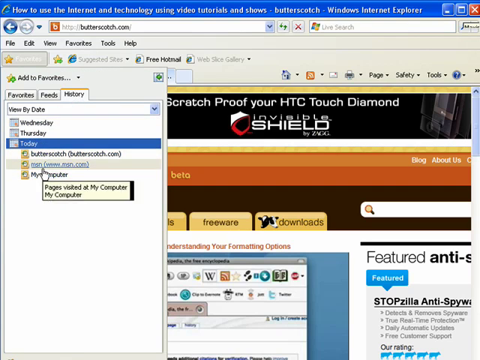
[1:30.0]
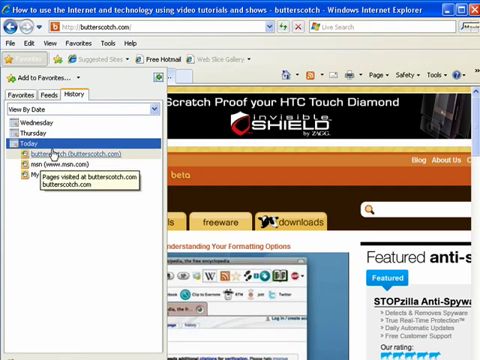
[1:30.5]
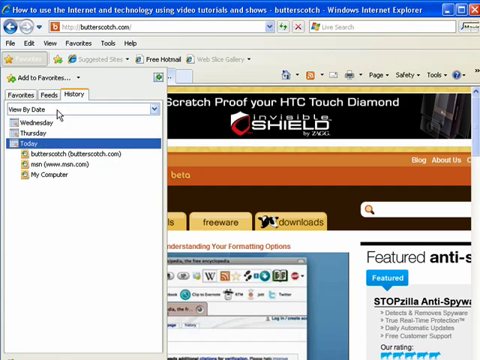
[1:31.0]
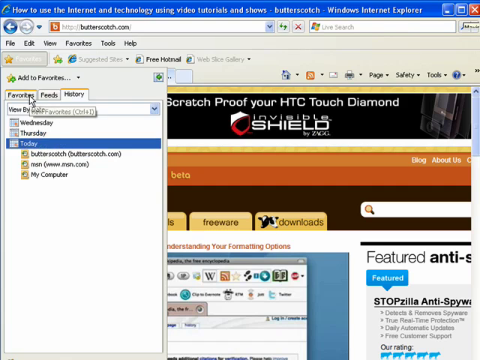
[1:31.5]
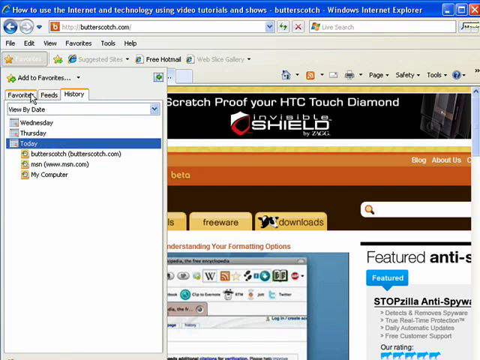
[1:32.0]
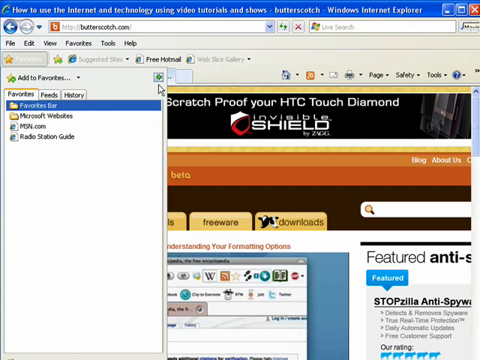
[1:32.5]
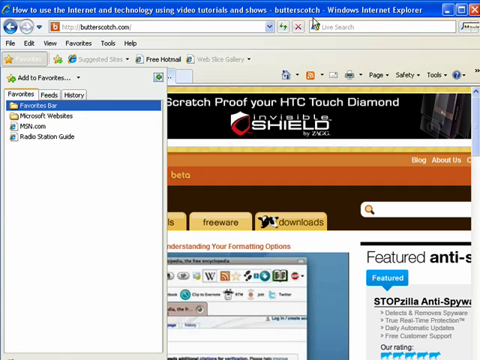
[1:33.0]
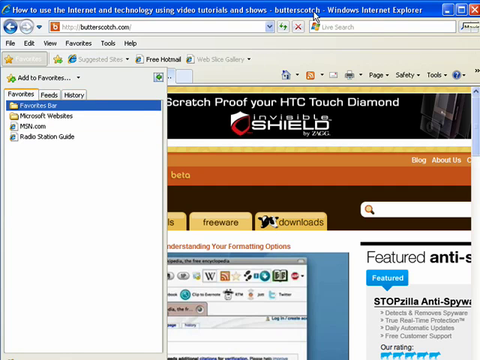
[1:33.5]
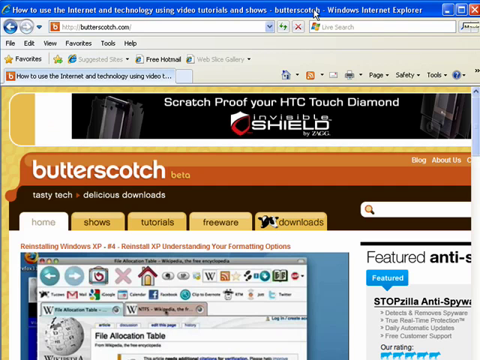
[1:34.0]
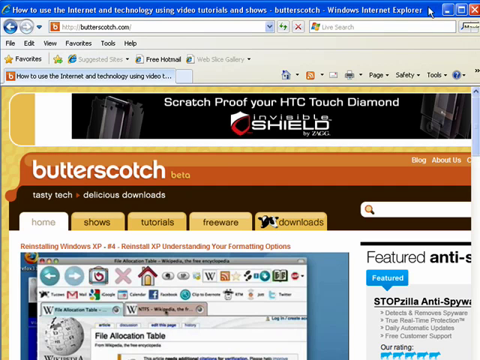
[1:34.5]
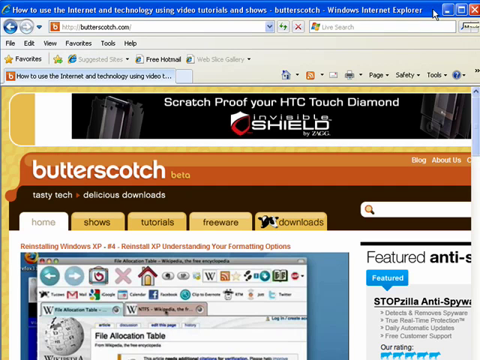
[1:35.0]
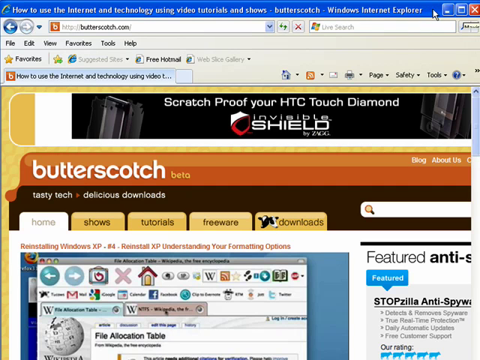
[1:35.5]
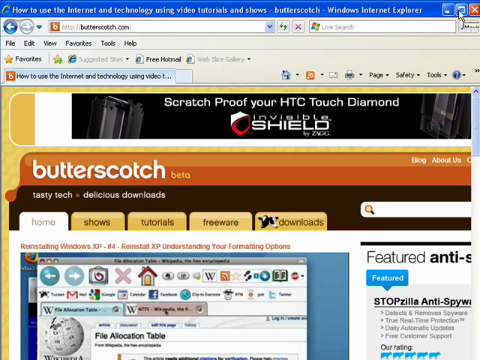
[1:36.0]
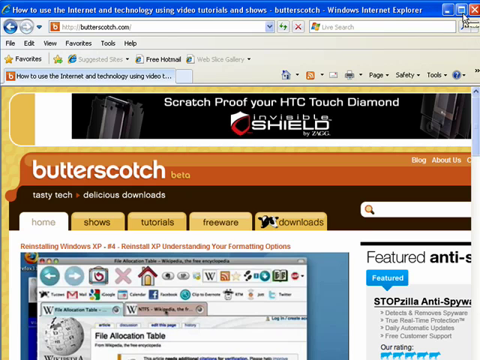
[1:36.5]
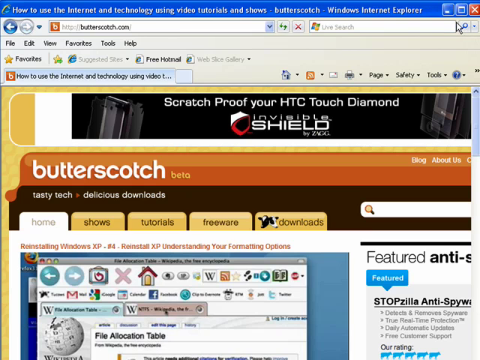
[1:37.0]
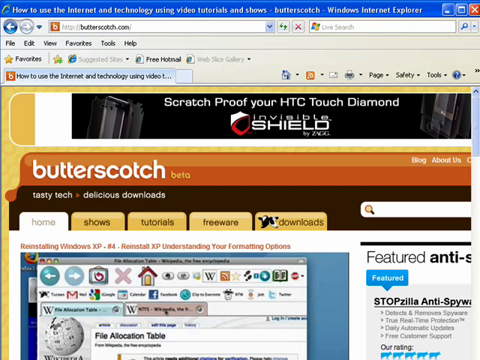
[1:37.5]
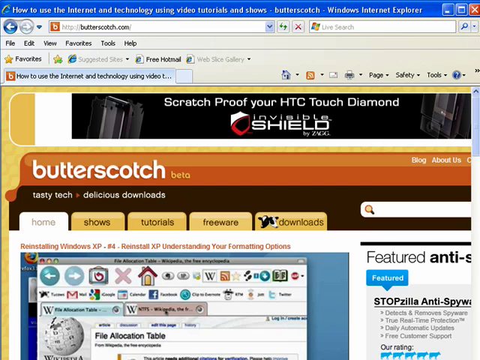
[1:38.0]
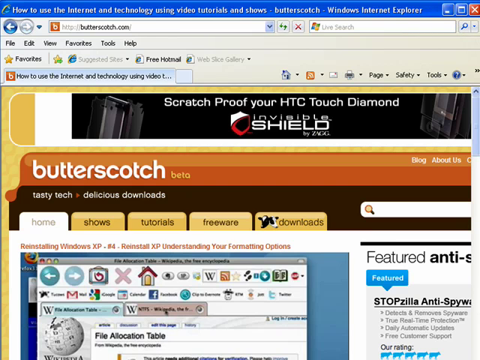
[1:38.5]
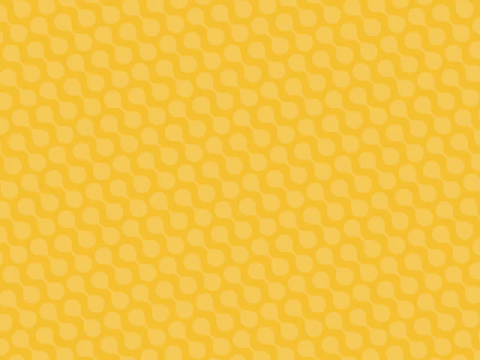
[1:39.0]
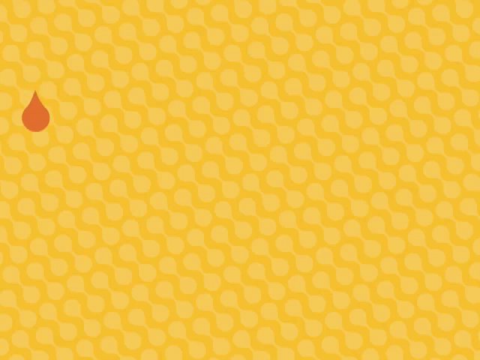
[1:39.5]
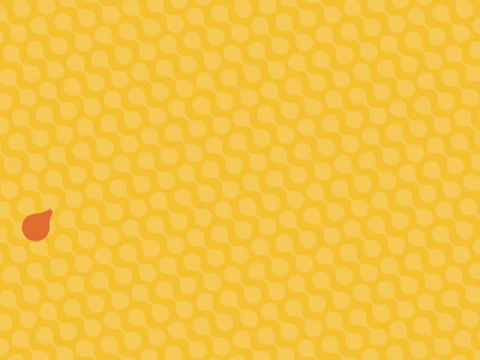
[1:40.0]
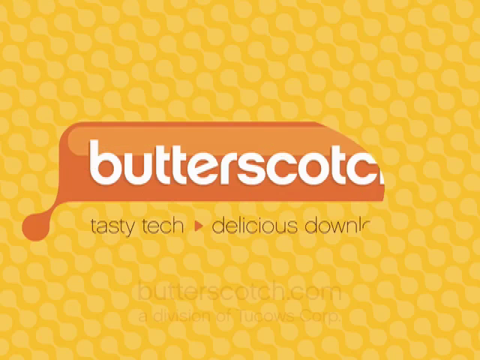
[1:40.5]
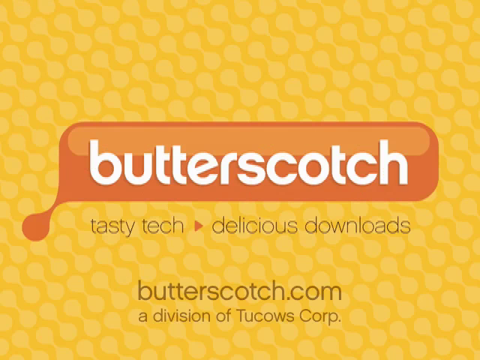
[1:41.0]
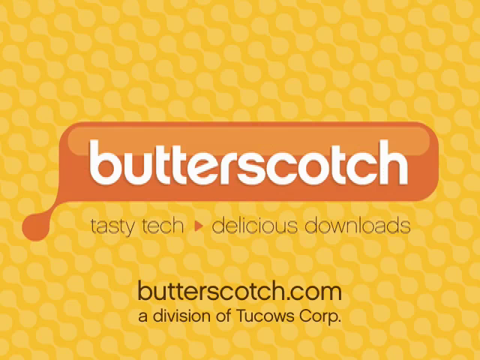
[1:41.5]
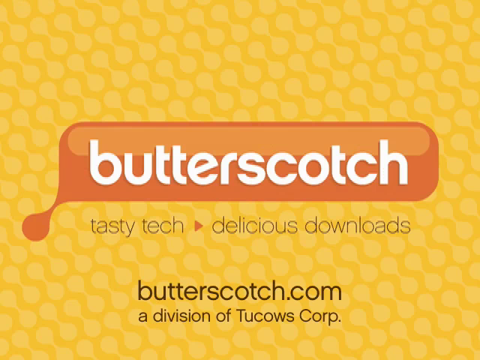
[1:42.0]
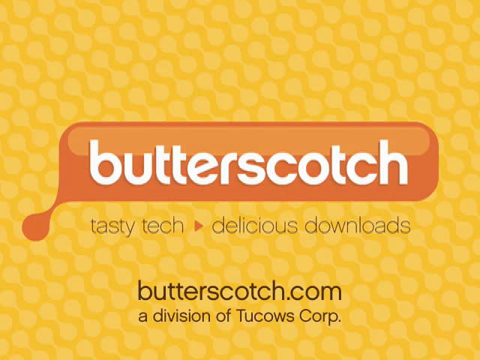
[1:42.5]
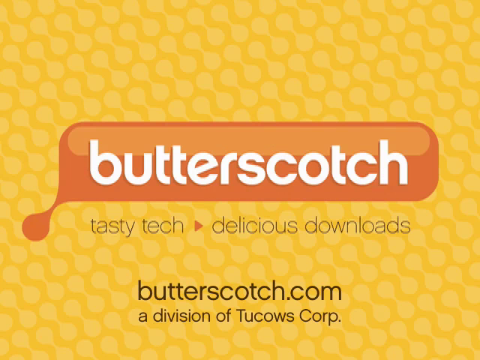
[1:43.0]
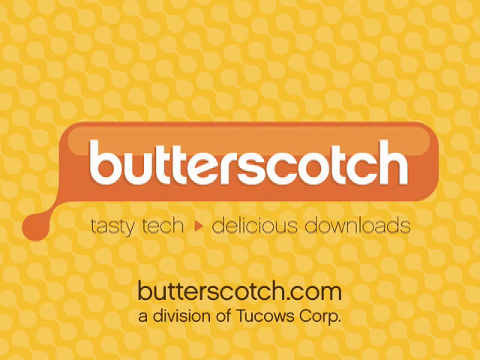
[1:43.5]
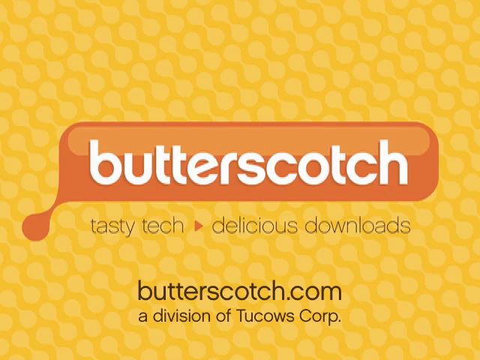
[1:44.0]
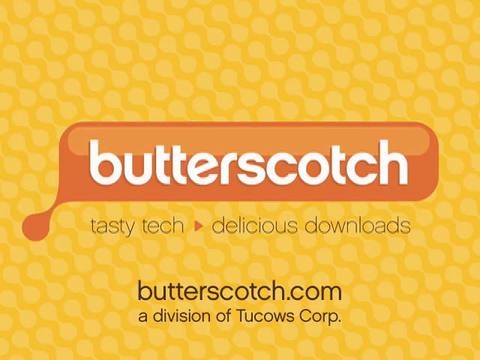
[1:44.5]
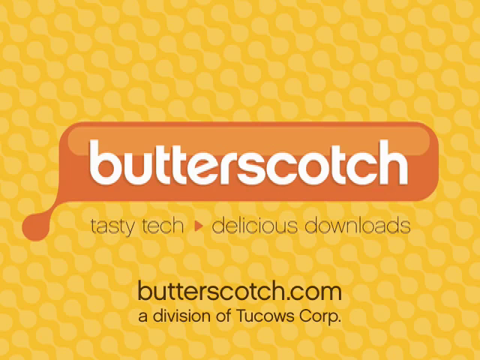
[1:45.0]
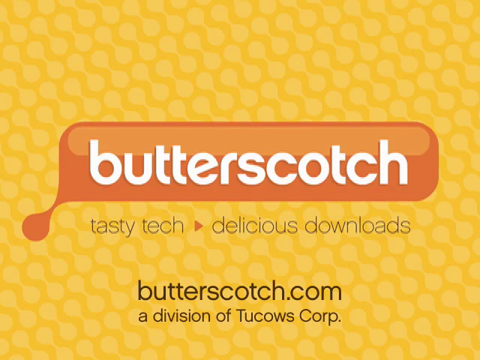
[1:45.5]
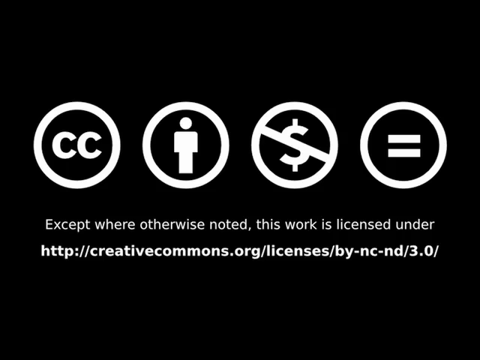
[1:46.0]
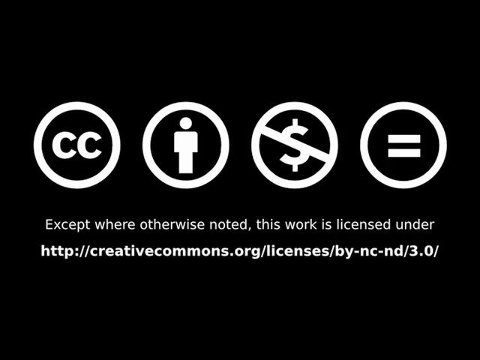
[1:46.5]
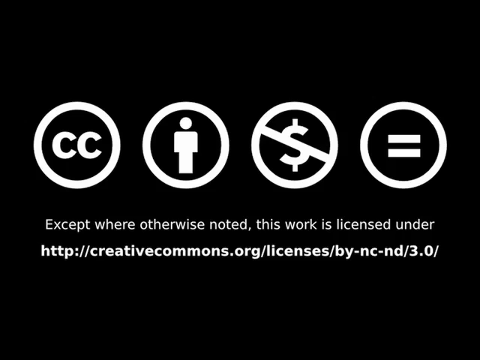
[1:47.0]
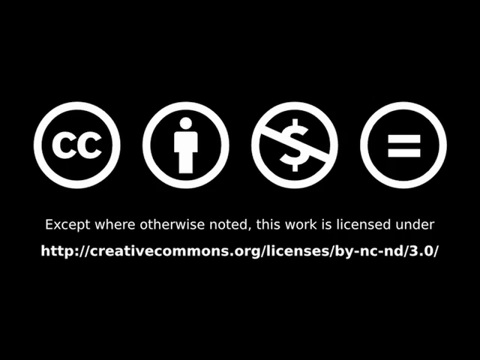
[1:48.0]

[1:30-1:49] The history is shown in the regular Internet Explorer browser on butterscotch.com, with no trace of the earlier visit to drff.com in InPrivate mode. The cursor then clicks the exit button on the butterscotch.com video tutorial website, and the opening animation plays again: the orange droplet turns into the butterscotch logo on the yellow background with a polka-dot finish. The heading below the butterscotch logo reads "tasty tech, delicious downloads," and the text under that reads "butterscotch.com, a division of Two Cows Corp." The video ends by staying on this last frame for about ten seconds or so.